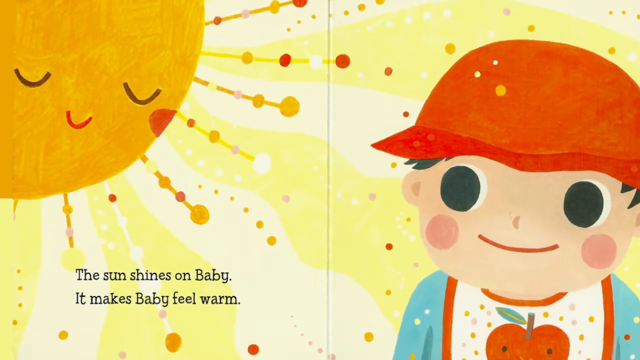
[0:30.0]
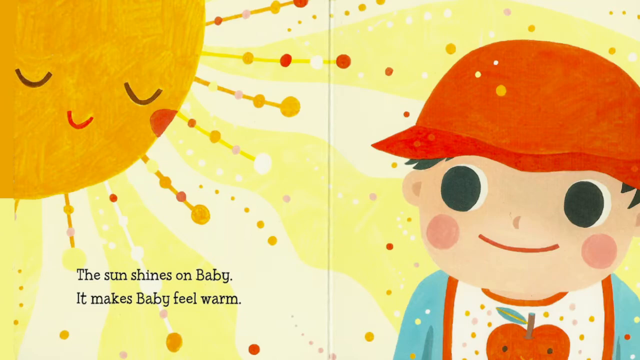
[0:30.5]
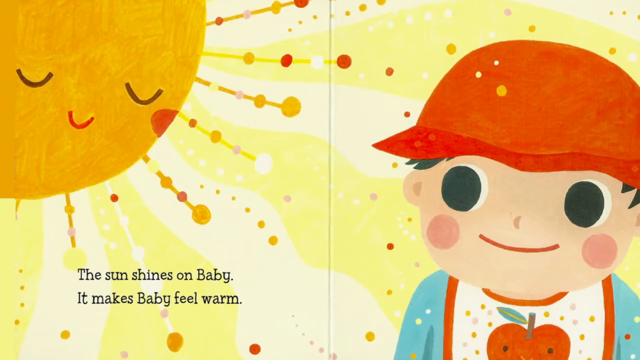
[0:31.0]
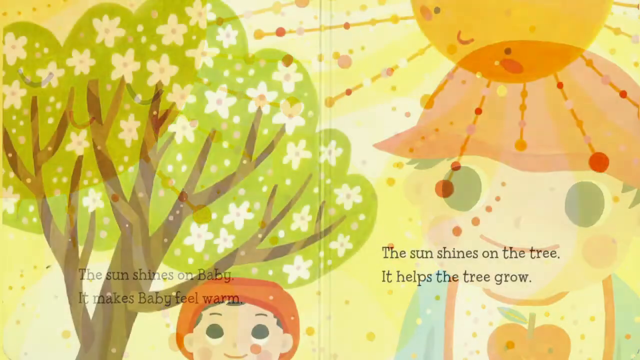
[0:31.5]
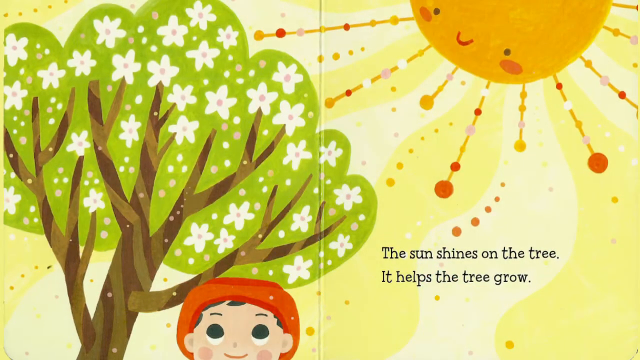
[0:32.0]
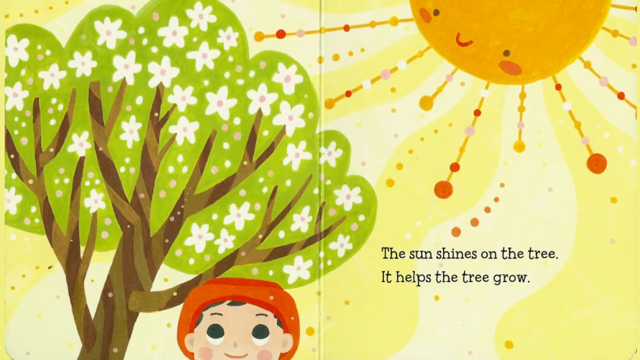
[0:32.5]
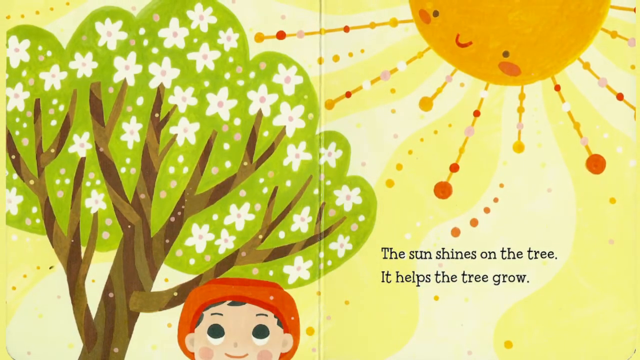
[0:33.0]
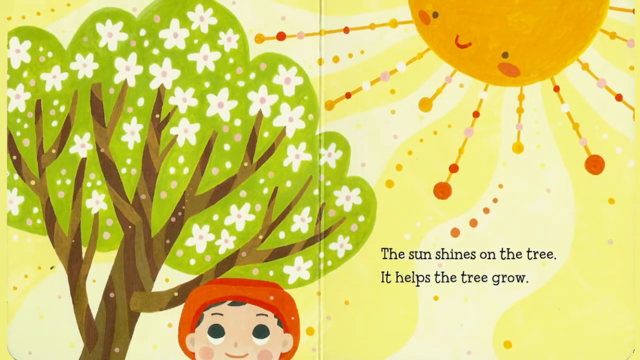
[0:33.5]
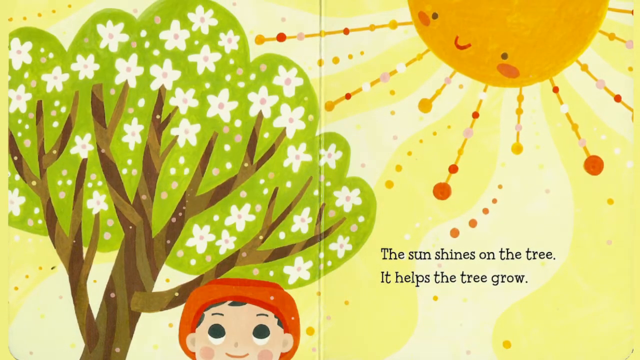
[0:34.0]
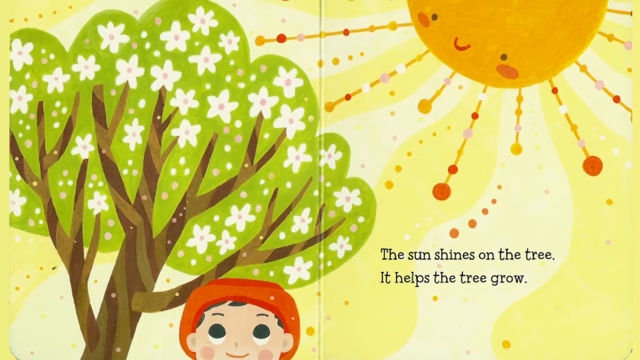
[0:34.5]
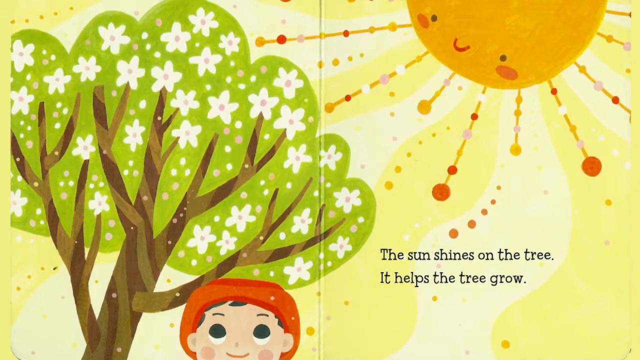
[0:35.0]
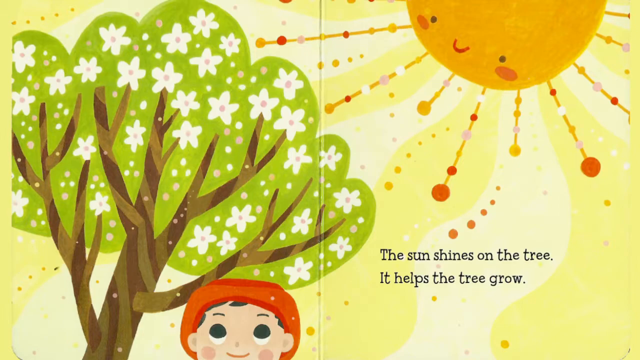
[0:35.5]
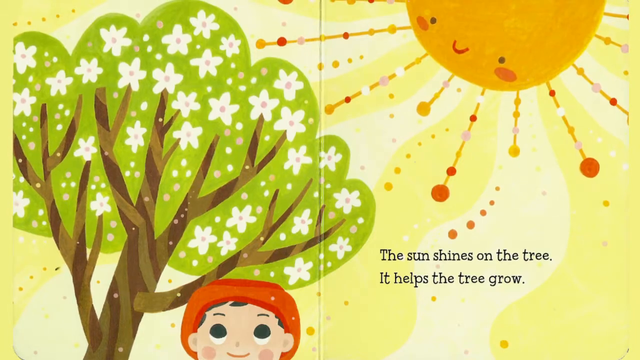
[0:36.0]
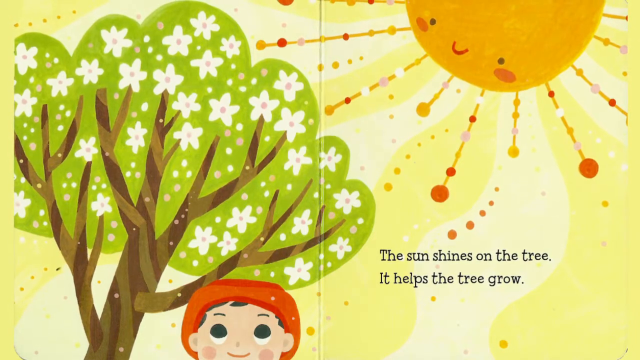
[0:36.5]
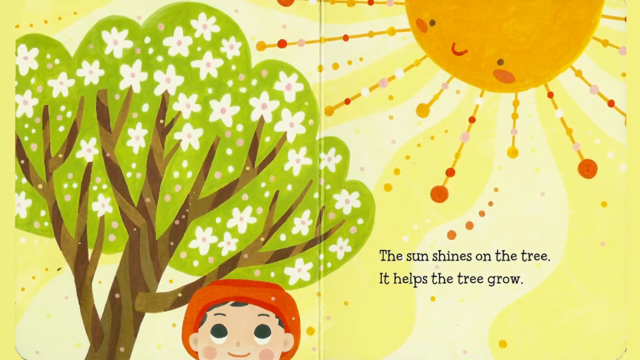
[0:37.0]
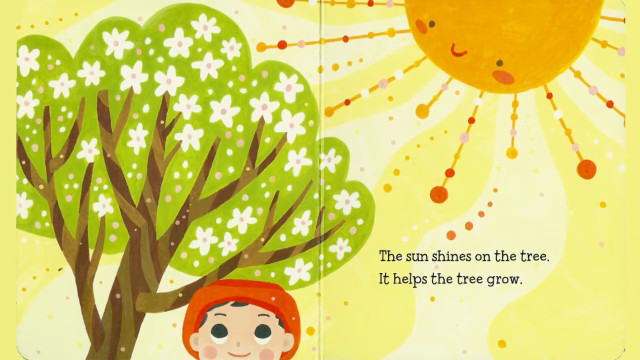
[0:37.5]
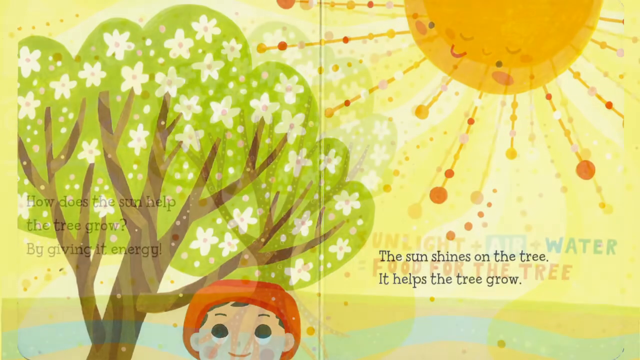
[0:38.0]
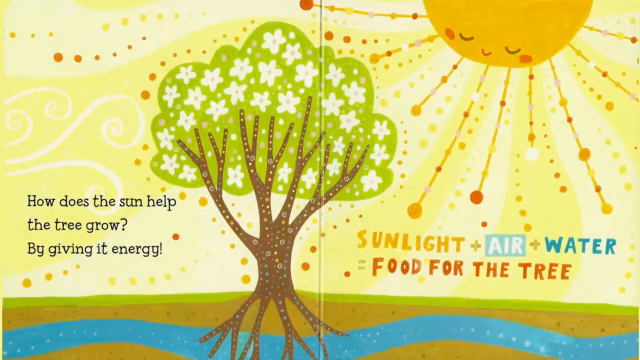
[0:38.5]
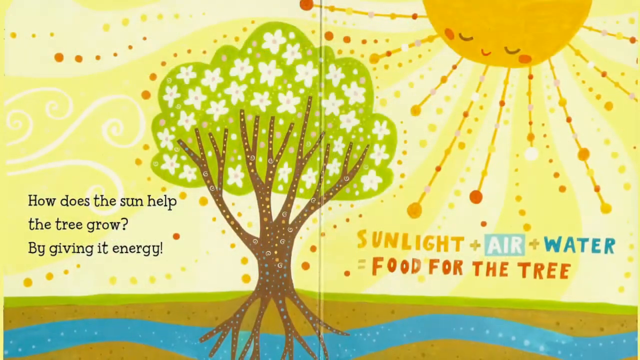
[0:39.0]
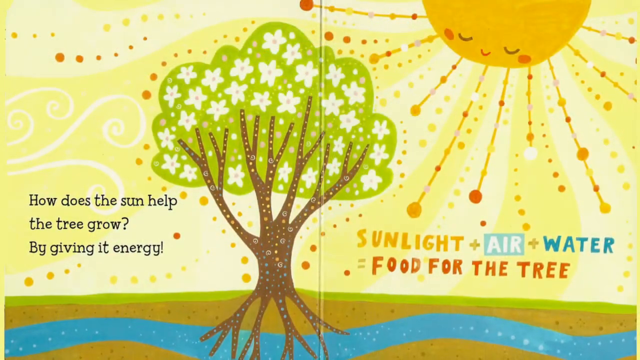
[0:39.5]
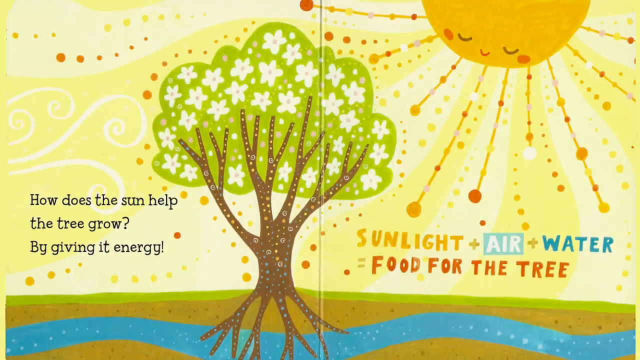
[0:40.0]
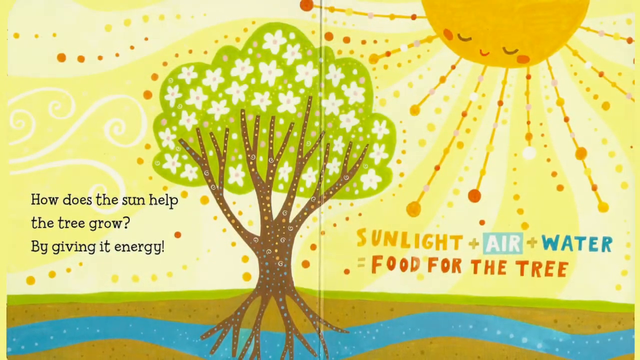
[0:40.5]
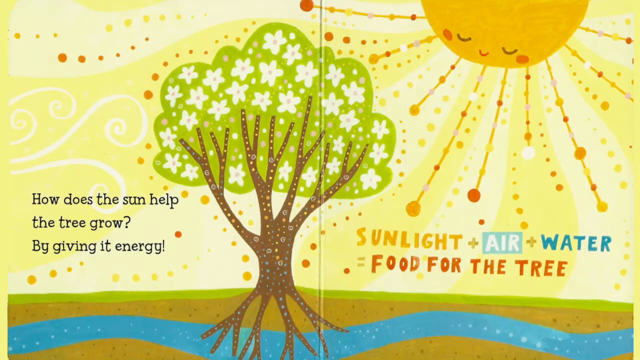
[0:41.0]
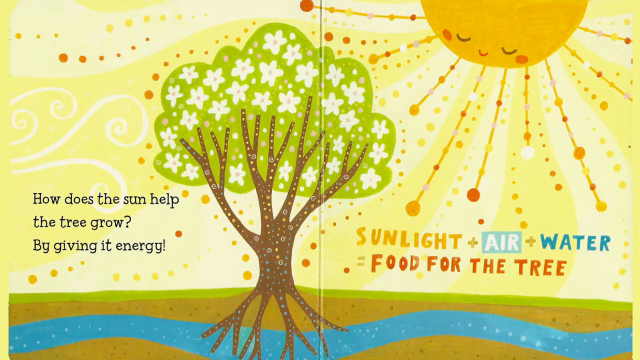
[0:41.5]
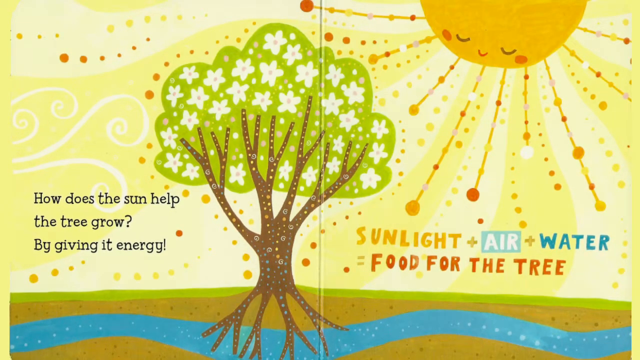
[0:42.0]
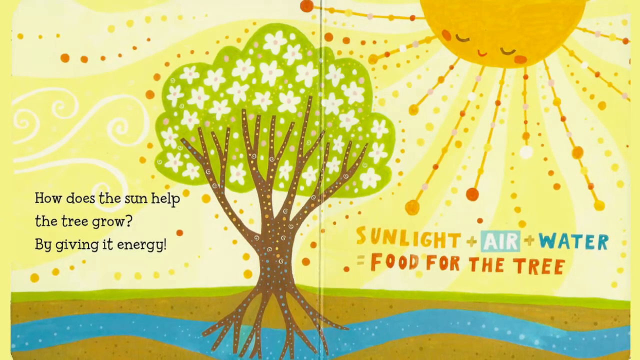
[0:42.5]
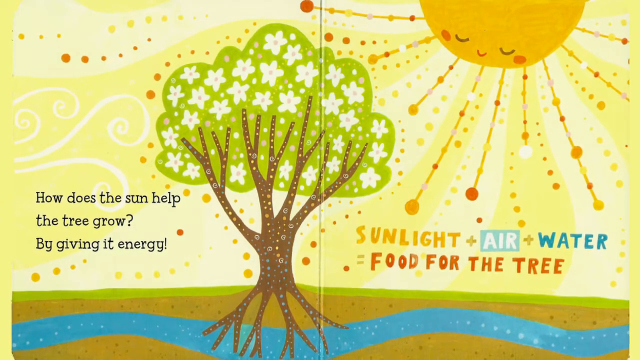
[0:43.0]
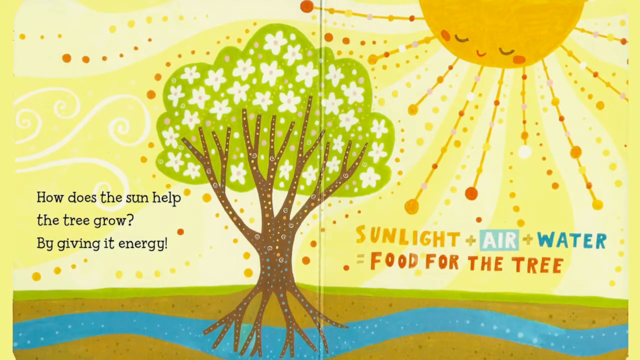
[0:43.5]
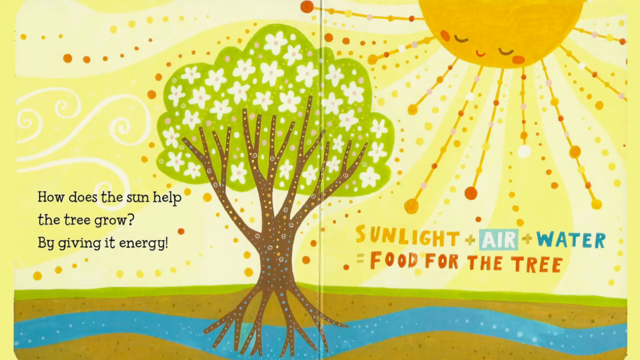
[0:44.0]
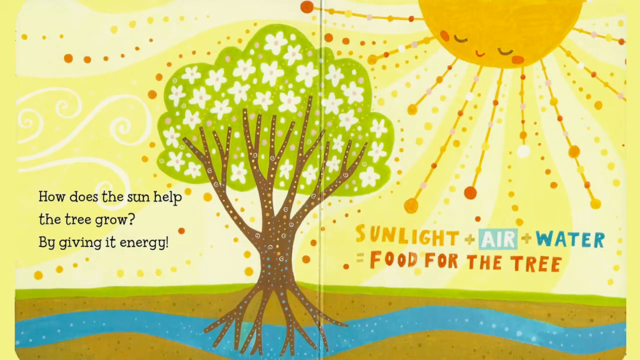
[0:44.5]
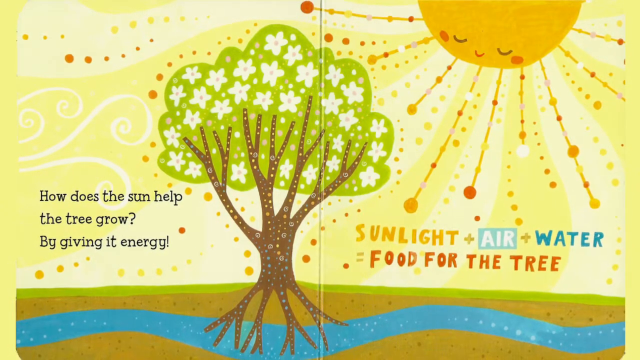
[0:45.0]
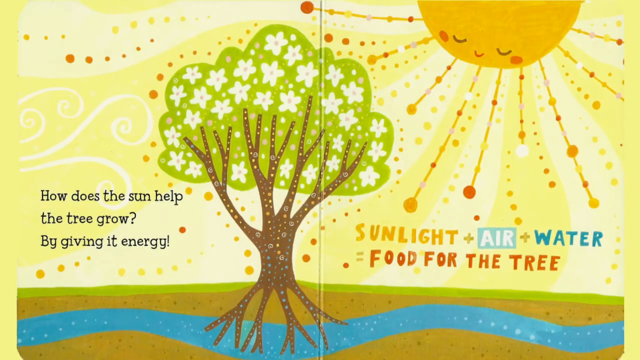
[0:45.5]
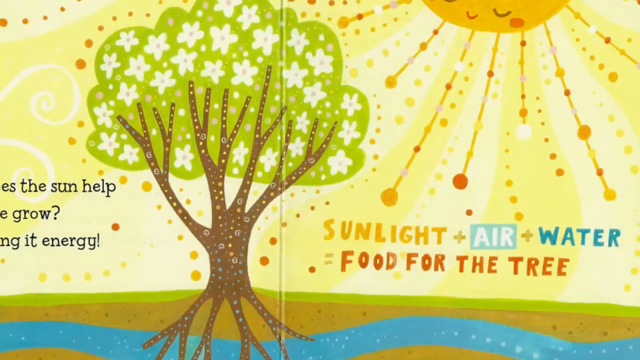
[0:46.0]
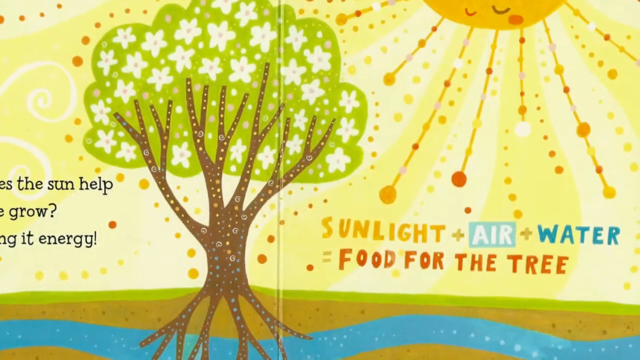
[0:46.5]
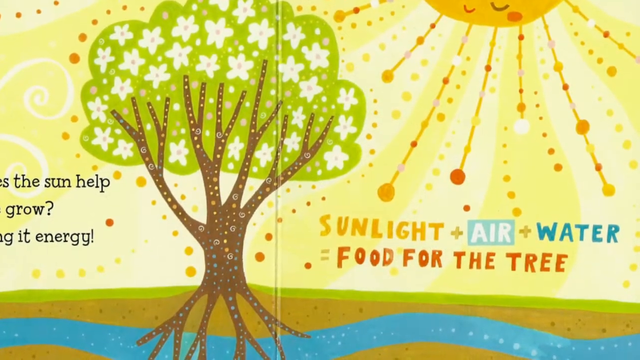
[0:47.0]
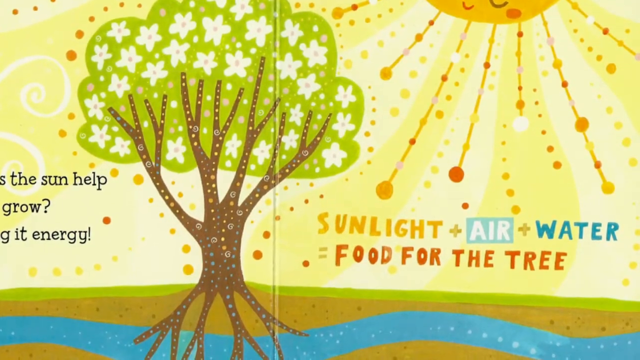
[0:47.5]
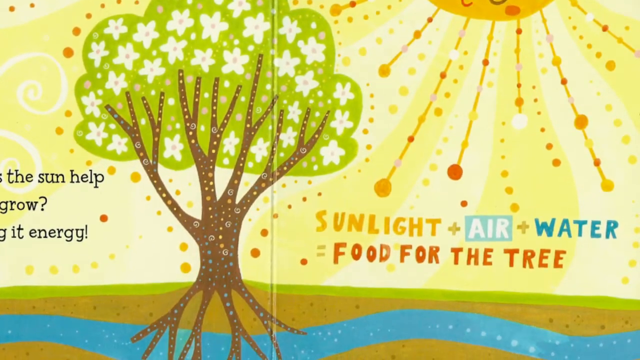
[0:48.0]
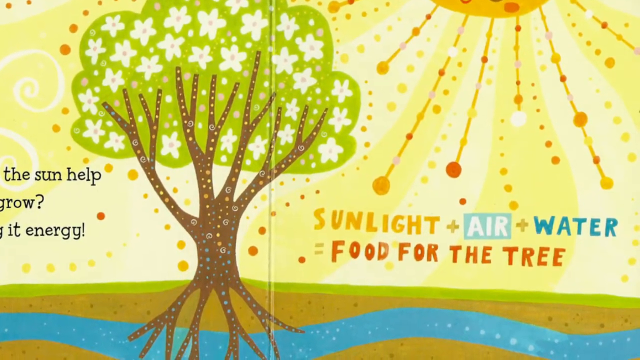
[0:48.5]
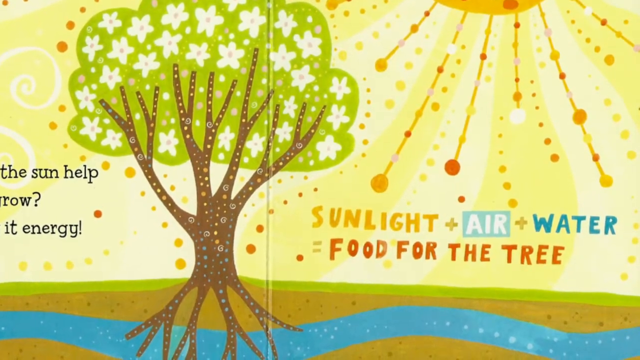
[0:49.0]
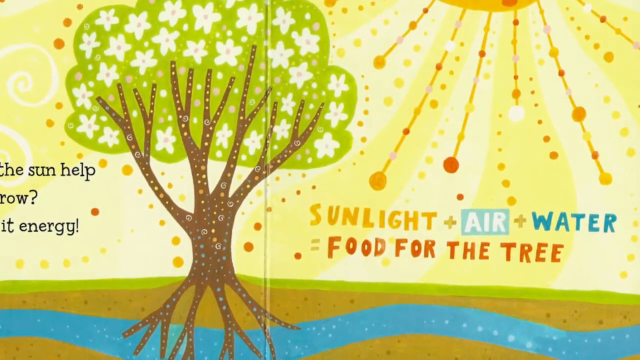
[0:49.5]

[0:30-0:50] The book is shown open, with a line coming down the center. On the left page is the sun, with eyes that appear to be closed and a mouth, and rays coming out of it. The rays have circles of different colors interspersed in them. The sun radiates out on the child, who is smiling; it is the same child as on the book cover. The child wears a blue shirt with a white bib that has orange trim and some sort of pattern that cannot be made out on this page. Text underneath the sun reads "the sun shines on the Baby. It makes Baby feel warm," with "Baby" capitalized as if it were a proper name. The next page shows a tree with white flowers and three branches on the left. The sun is now on the right, and the child is underneath the tree. The text reads "the sun shines on the tree. It helps the tree grow." The background is yellow. On the next page the tree is centered and there is no child. On the left, in black, it says "how does the sun help the tree grow? By giving it energy." Underneath the sun on the right is "sunlight + air + water" and "food for the tree," with sunlight in yellow, air in white on a blue background, water in turquoise, and "food for the tree" in red.